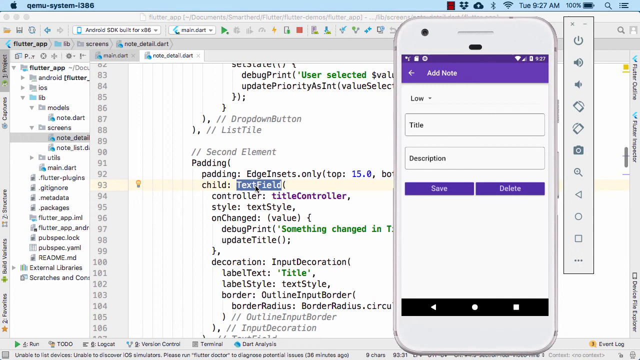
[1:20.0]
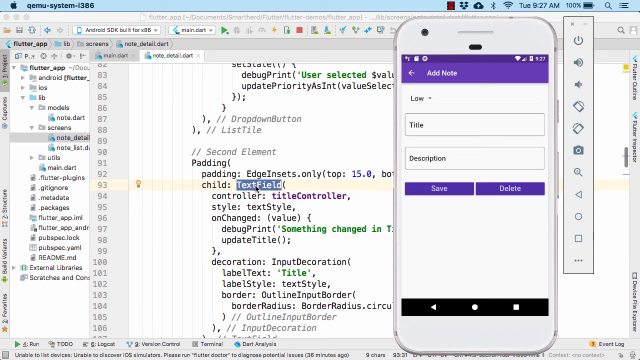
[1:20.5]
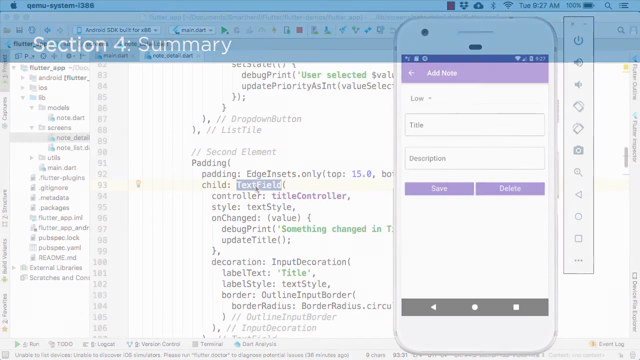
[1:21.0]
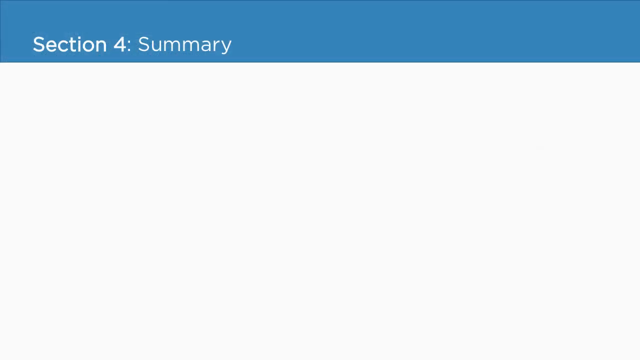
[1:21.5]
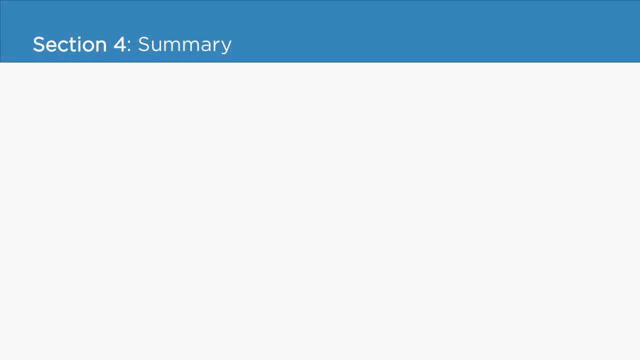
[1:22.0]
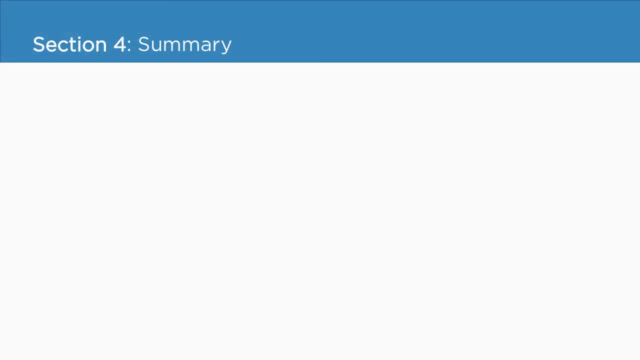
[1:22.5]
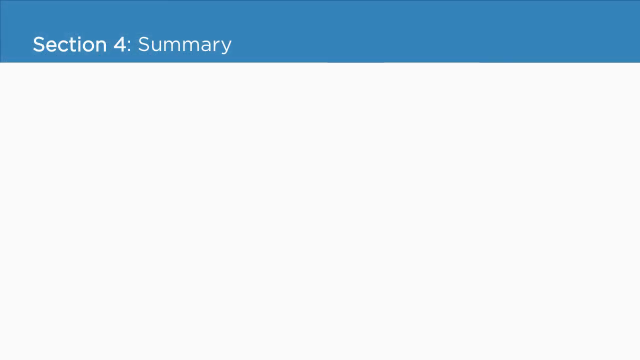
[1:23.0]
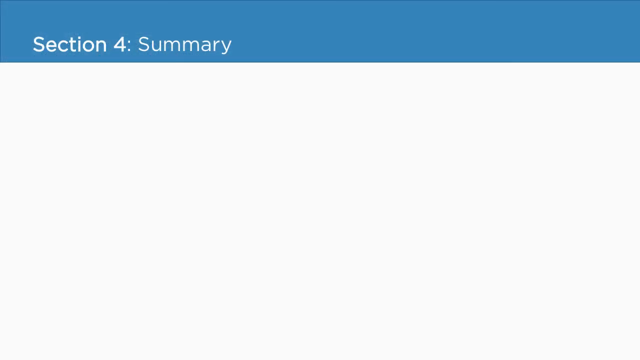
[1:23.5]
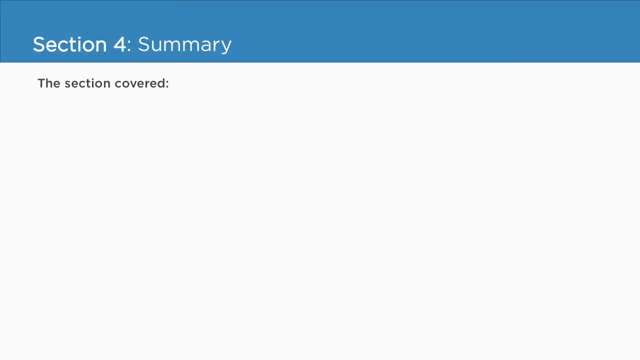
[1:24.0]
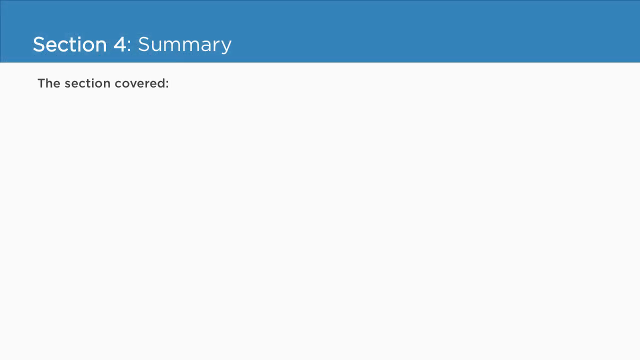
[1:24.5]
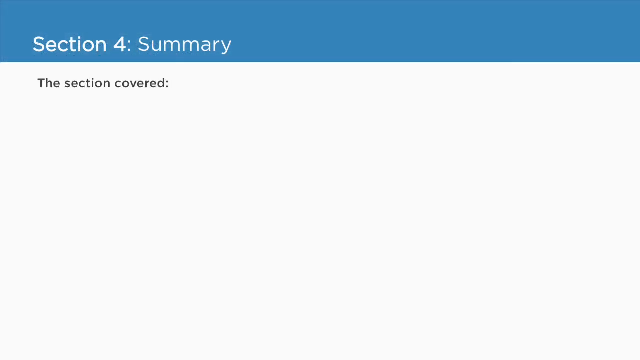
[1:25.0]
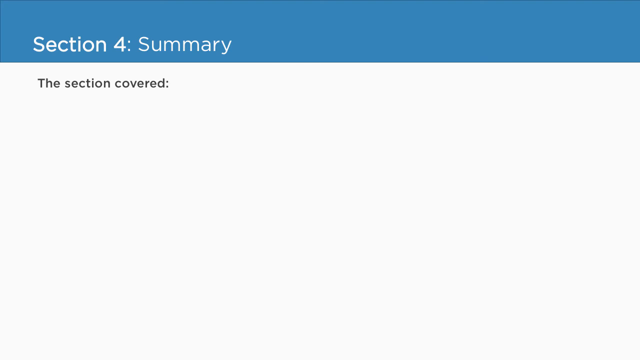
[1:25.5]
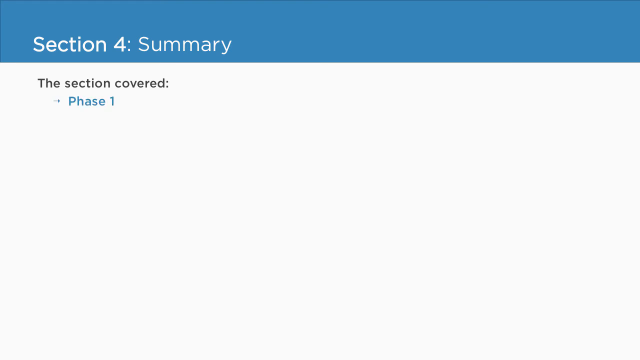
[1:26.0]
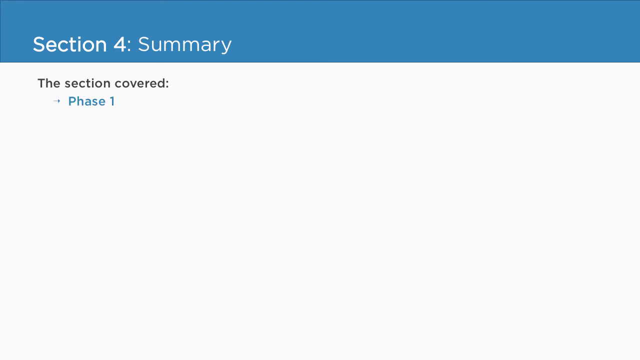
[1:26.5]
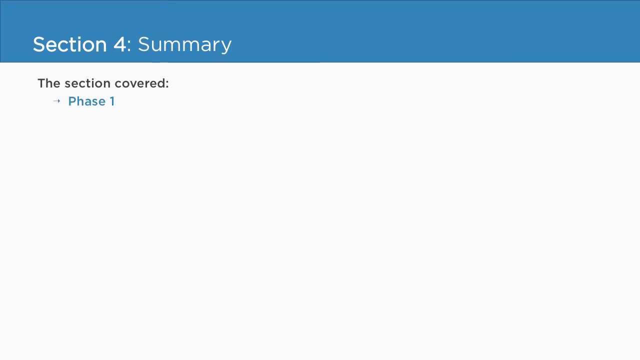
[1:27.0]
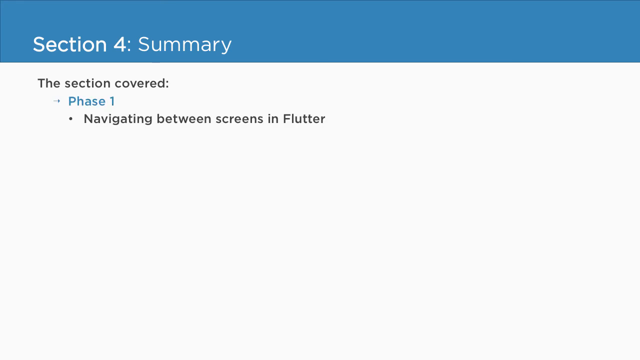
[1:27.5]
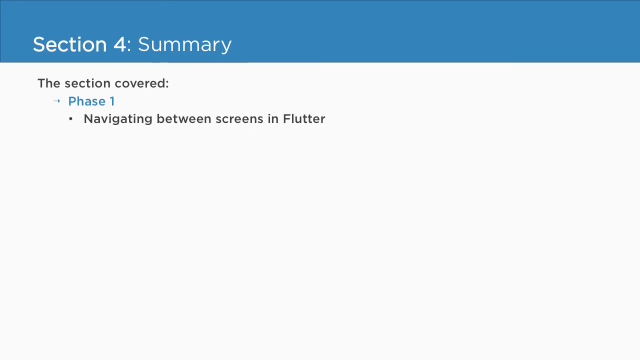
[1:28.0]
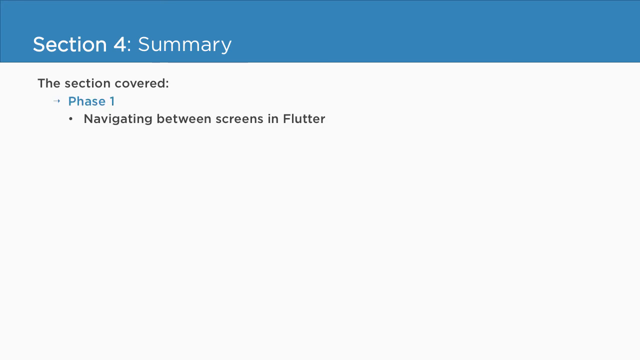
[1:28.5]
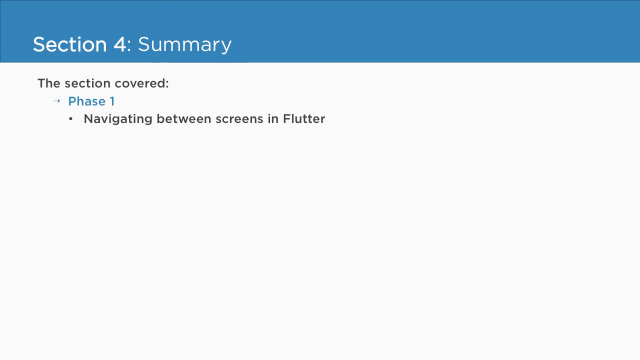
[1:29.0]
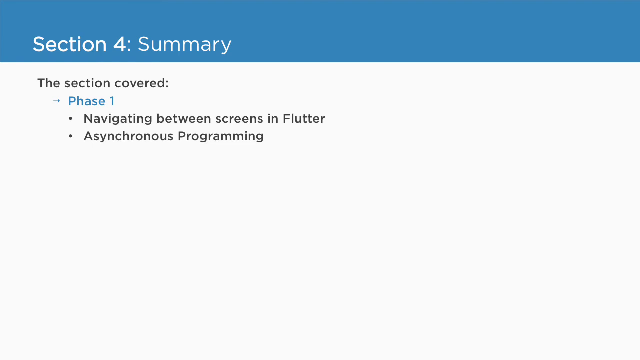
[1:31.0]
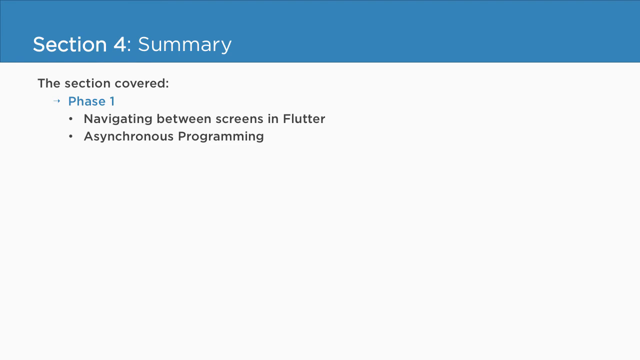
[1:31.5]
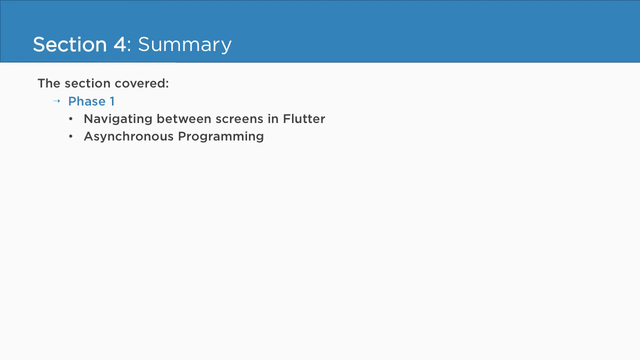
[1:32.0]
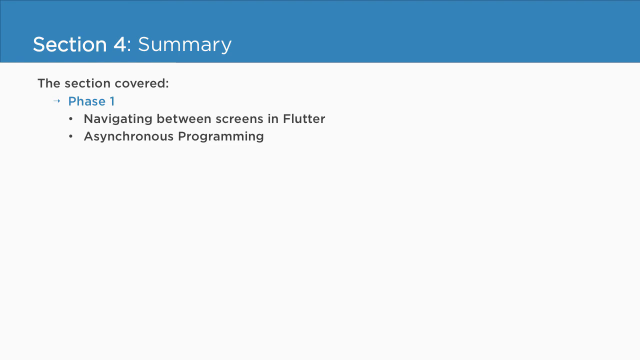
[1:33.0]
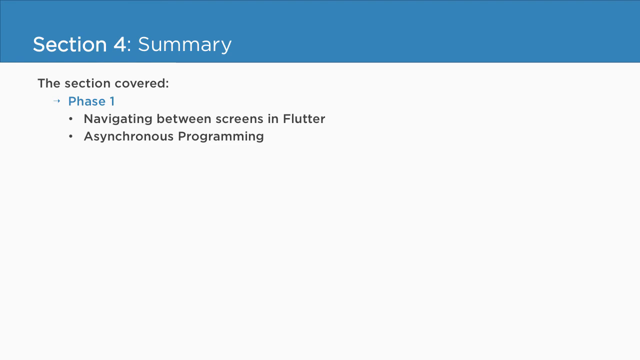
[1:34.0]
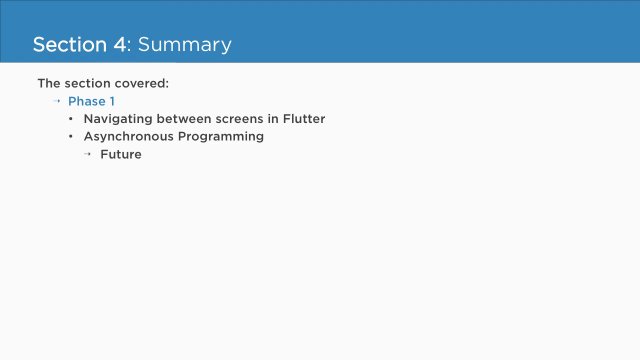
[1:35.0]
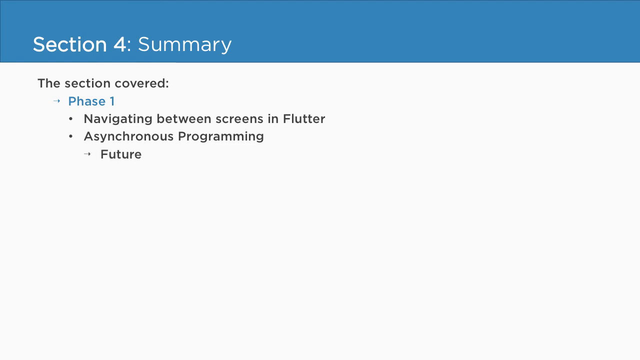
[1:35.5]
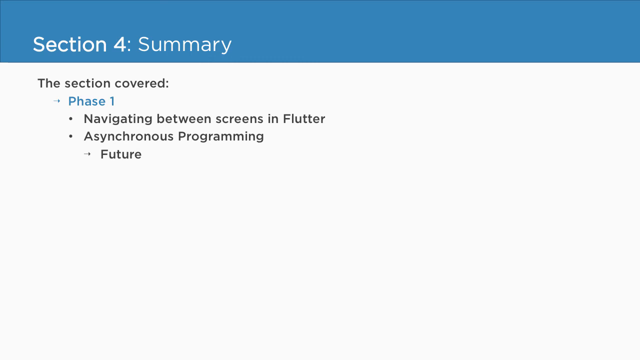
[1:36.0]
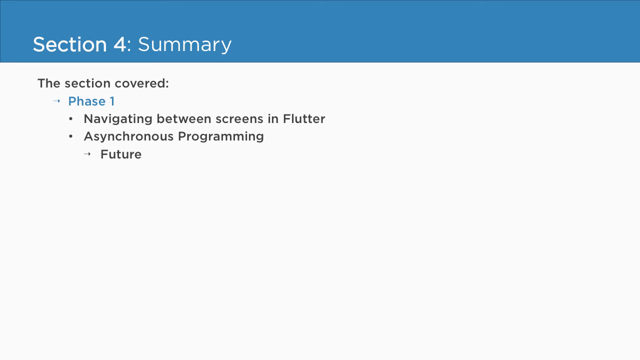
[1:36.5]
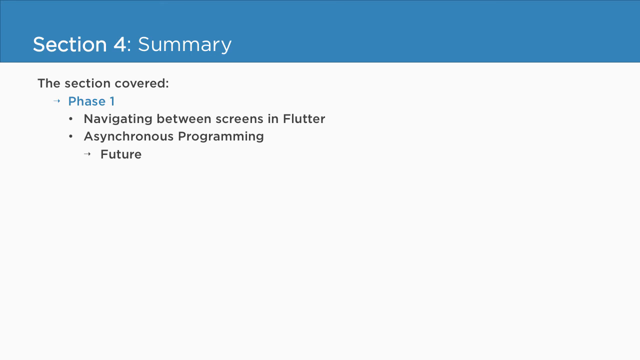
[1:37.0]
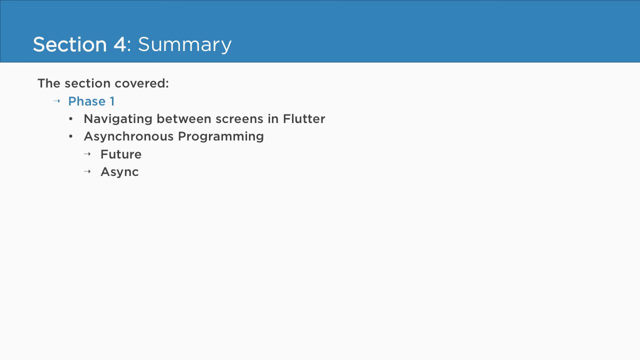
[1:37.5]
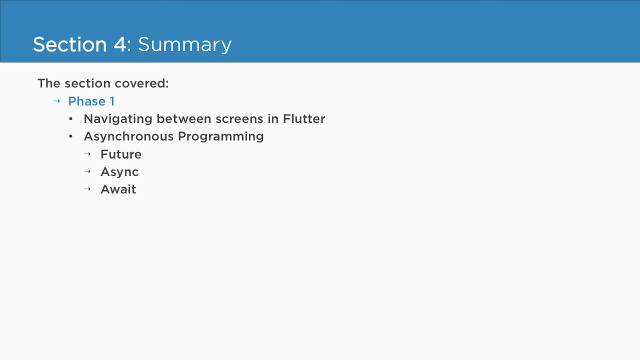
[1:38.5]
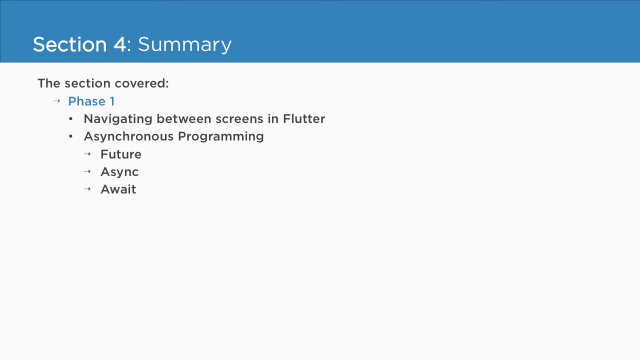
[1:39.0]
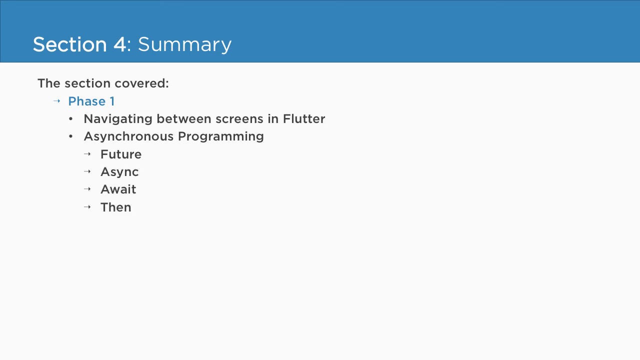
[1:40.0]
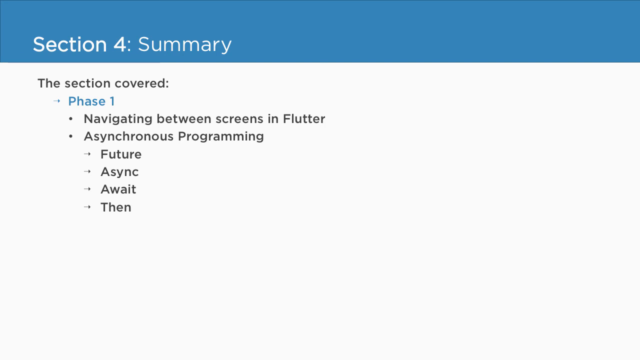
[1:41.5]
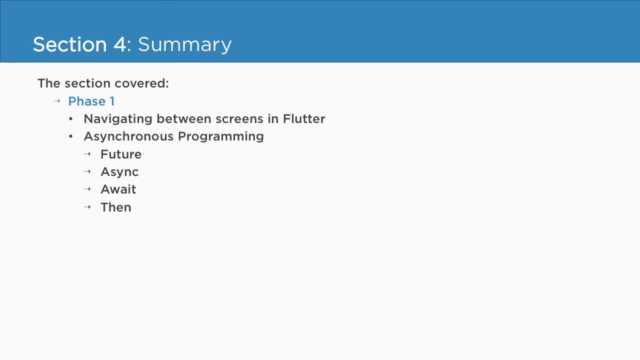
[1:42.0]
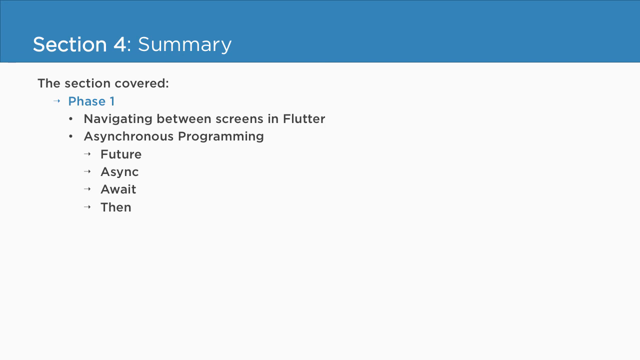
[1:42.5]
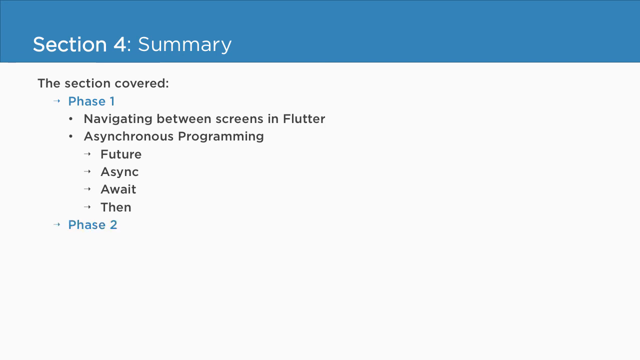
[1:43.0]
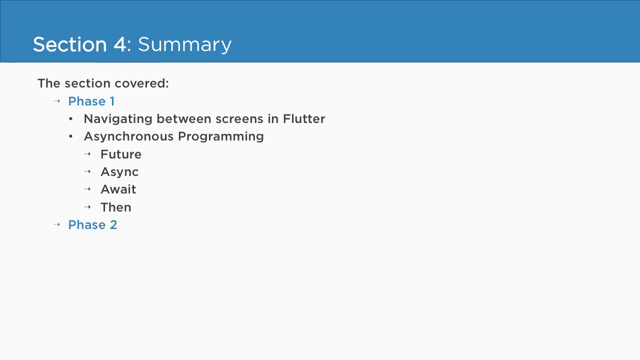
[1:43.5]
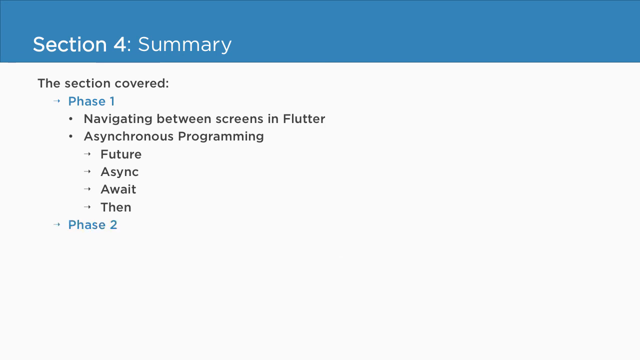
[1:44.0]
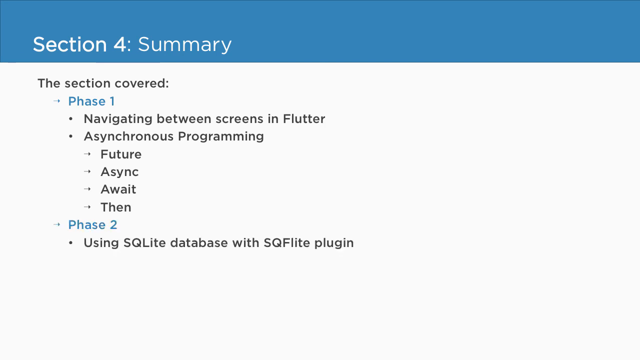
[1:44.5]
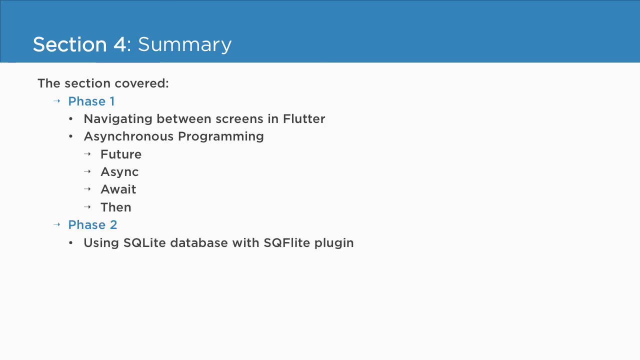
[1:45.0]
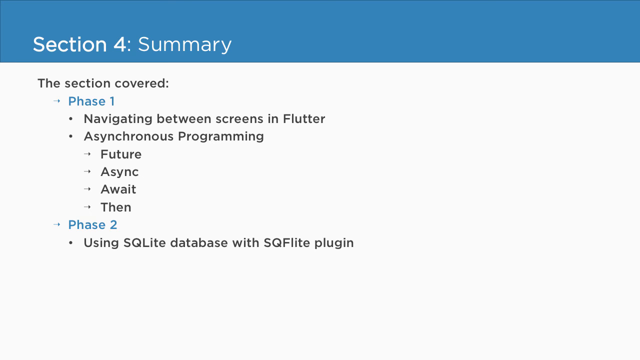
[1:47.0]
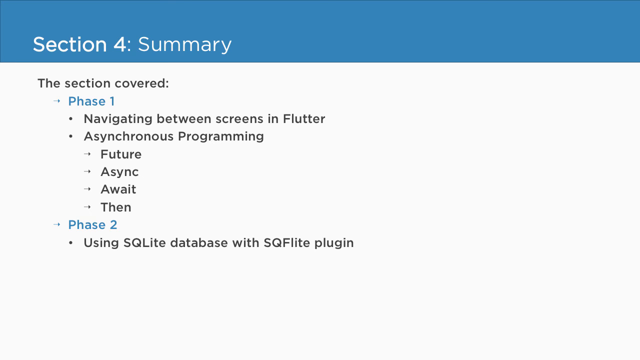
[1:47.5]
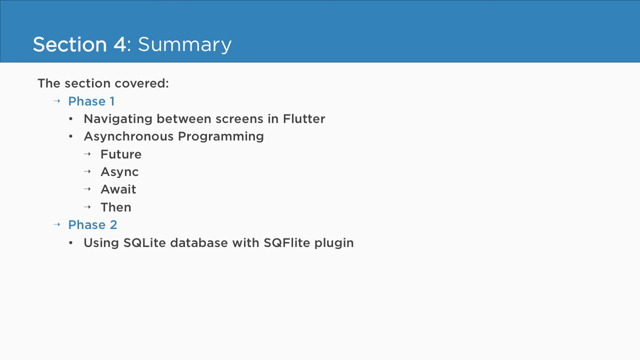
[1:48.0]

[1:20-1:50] A summary slide appears, apparently reviewing what was covered earlier. It shows a section overview for phase one, which seems to have dealt with asynchronous programming, and phase two, which covers database steps.